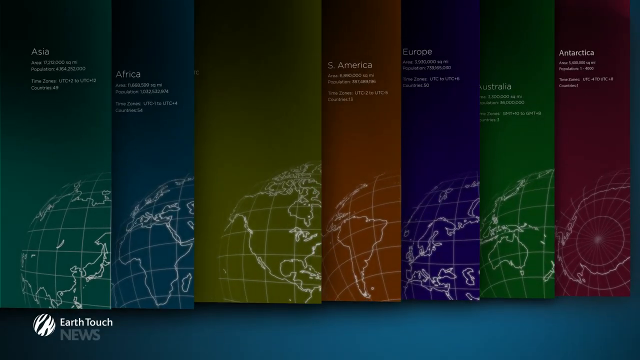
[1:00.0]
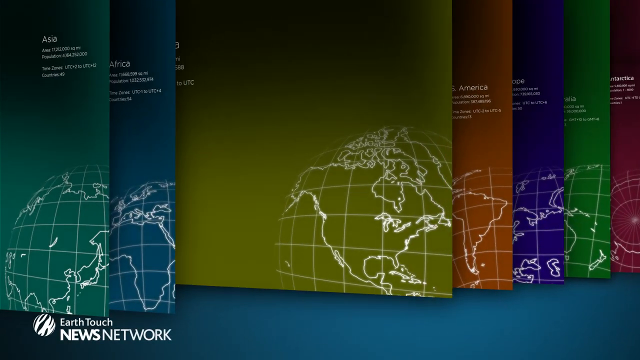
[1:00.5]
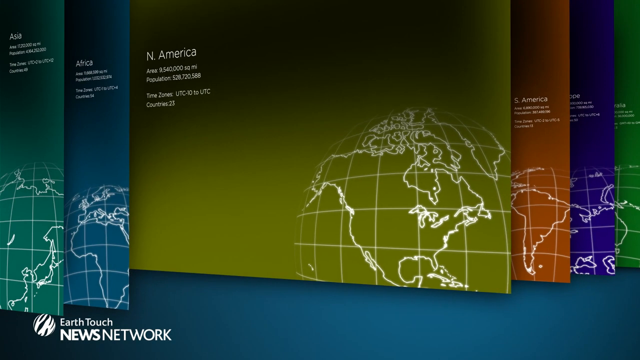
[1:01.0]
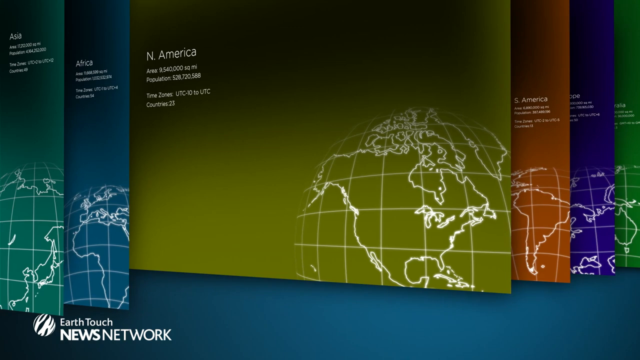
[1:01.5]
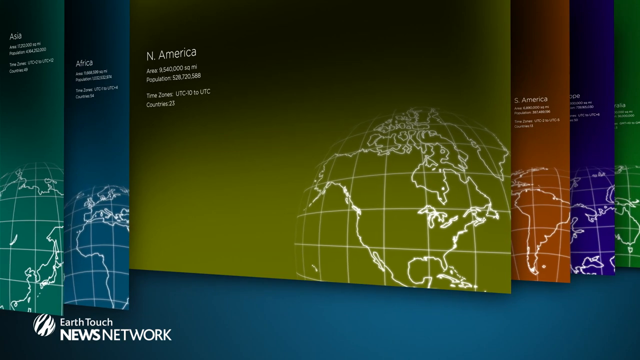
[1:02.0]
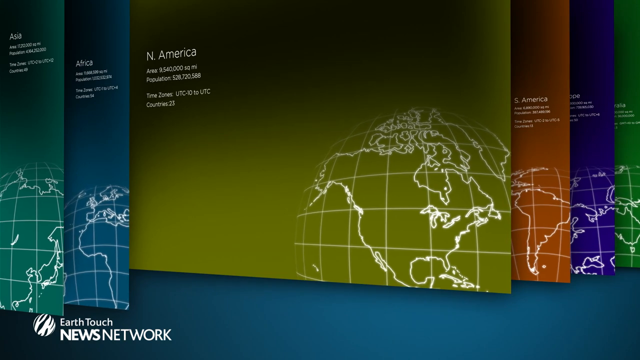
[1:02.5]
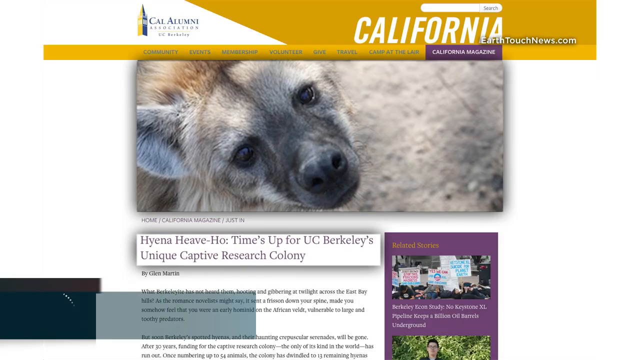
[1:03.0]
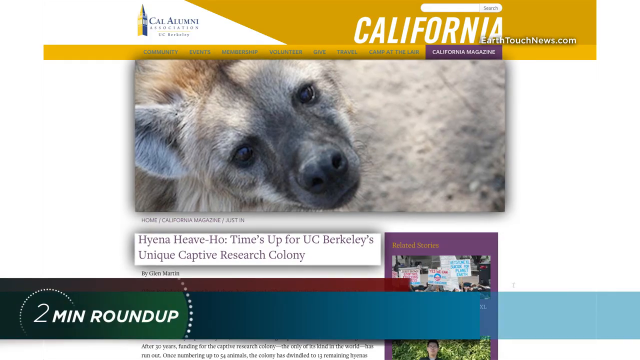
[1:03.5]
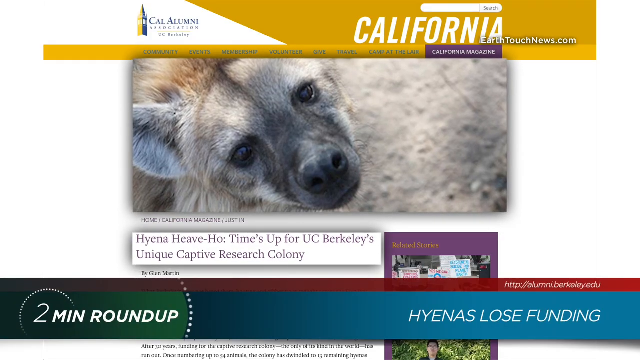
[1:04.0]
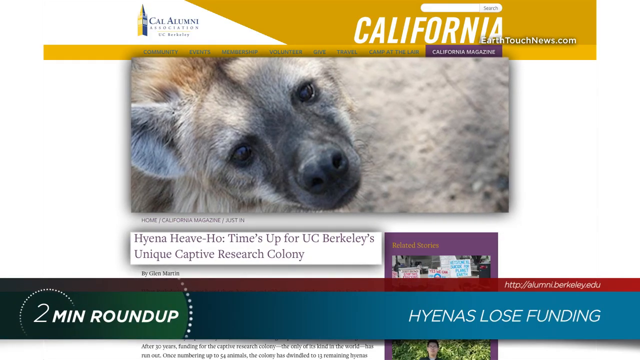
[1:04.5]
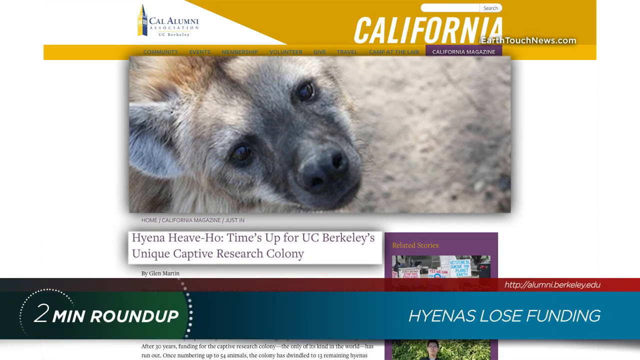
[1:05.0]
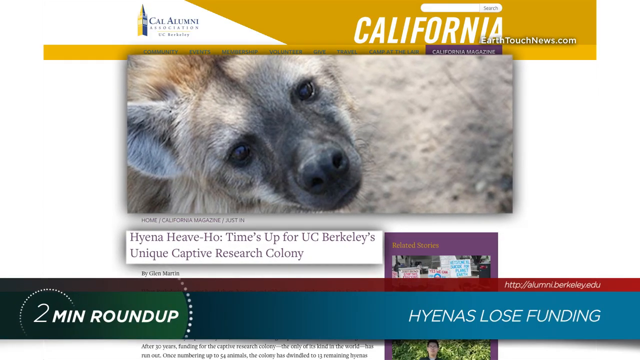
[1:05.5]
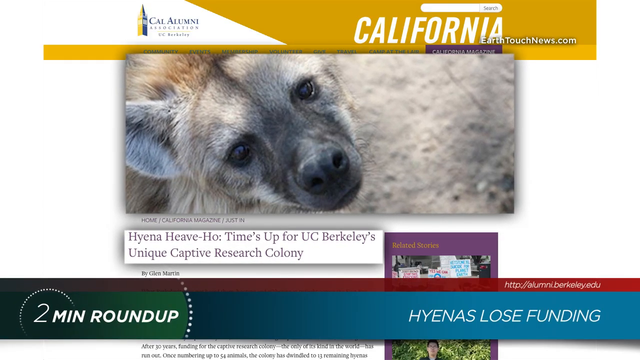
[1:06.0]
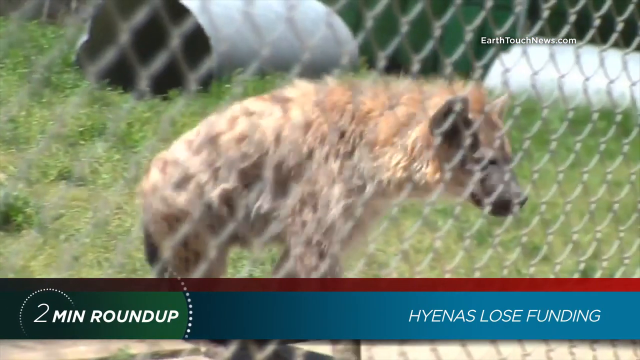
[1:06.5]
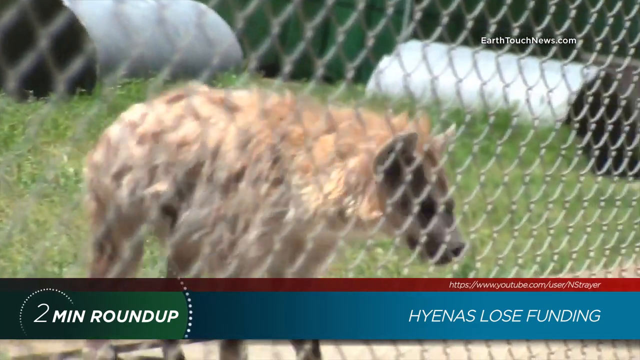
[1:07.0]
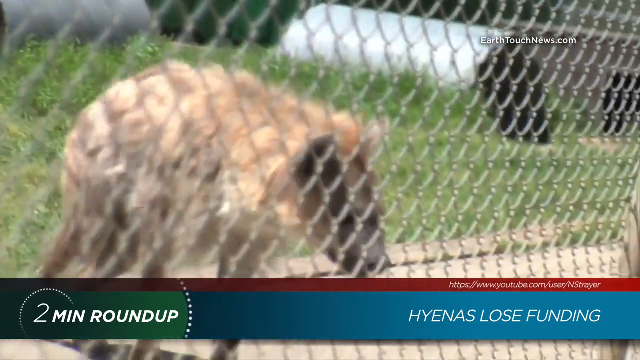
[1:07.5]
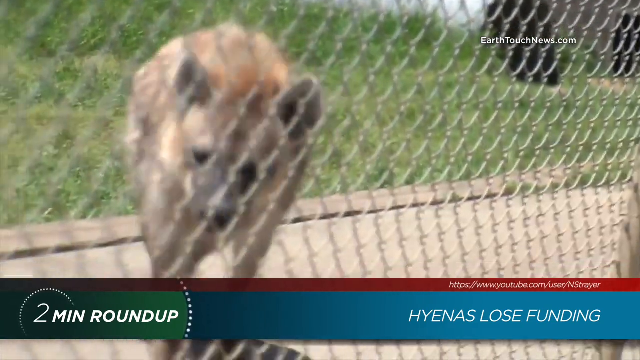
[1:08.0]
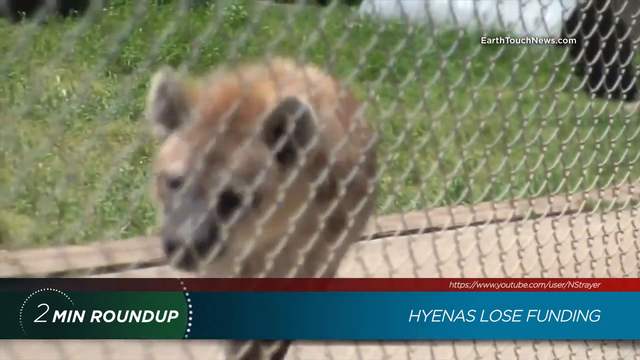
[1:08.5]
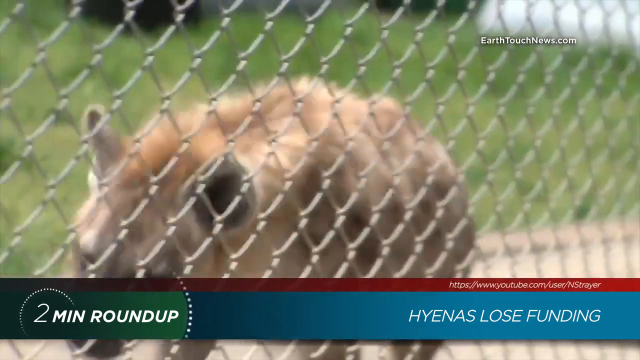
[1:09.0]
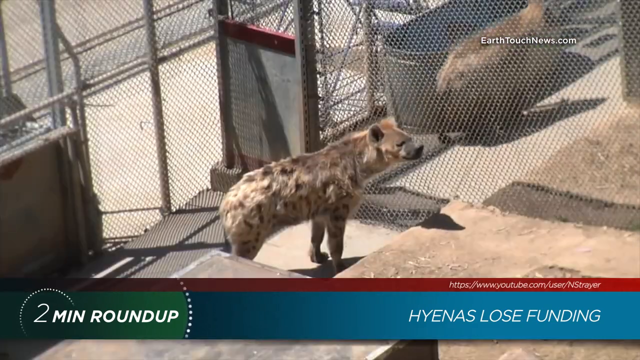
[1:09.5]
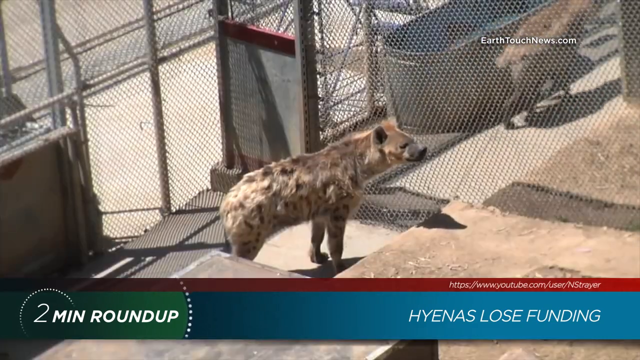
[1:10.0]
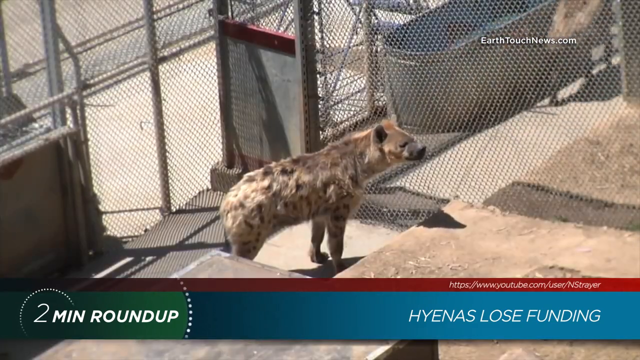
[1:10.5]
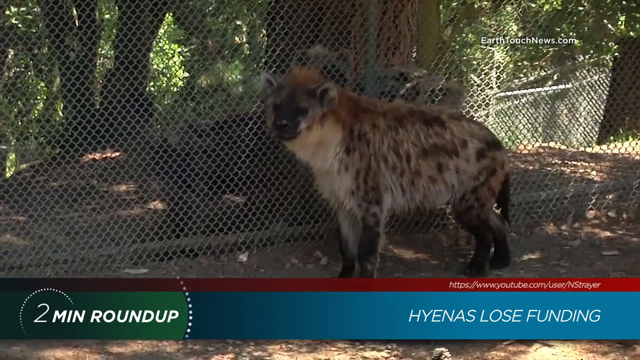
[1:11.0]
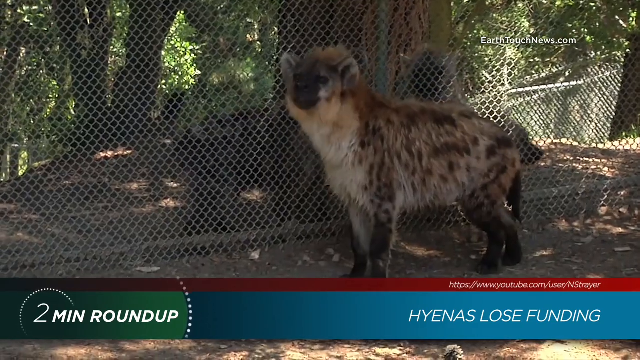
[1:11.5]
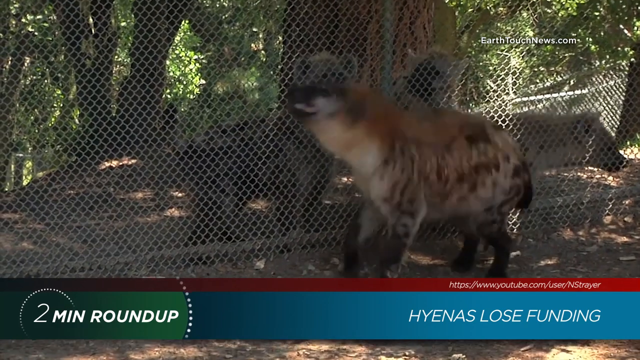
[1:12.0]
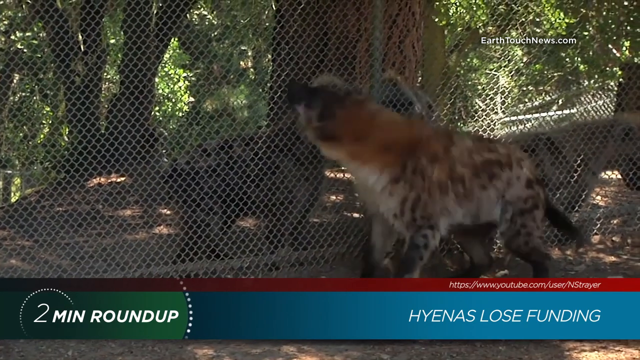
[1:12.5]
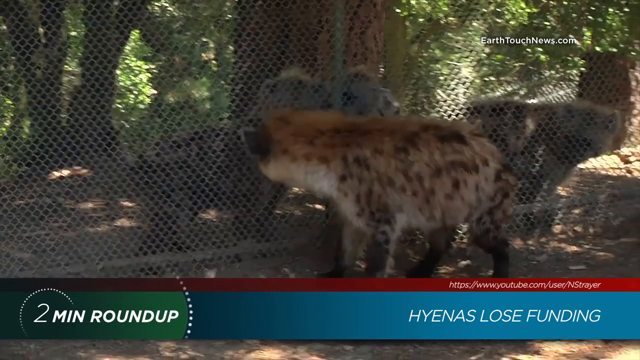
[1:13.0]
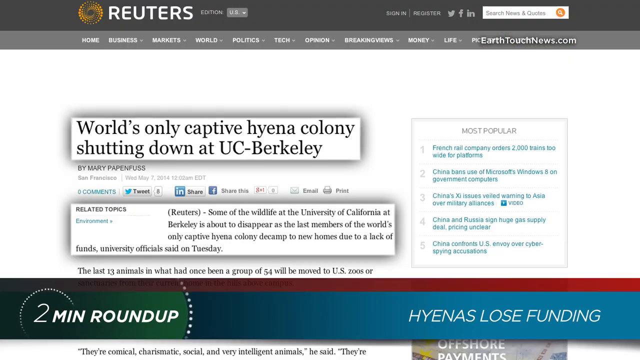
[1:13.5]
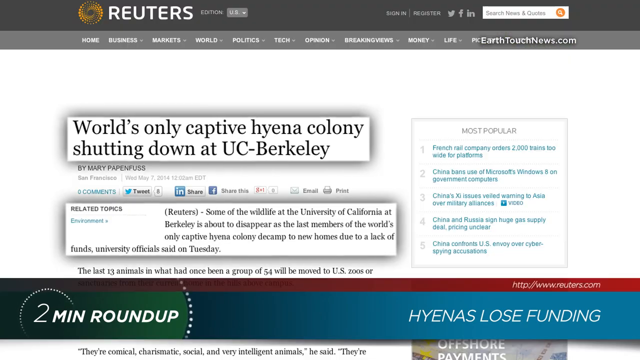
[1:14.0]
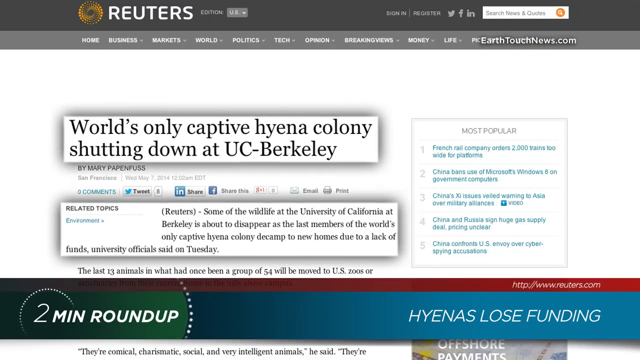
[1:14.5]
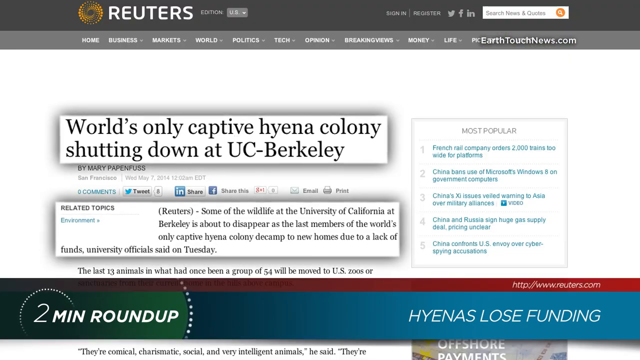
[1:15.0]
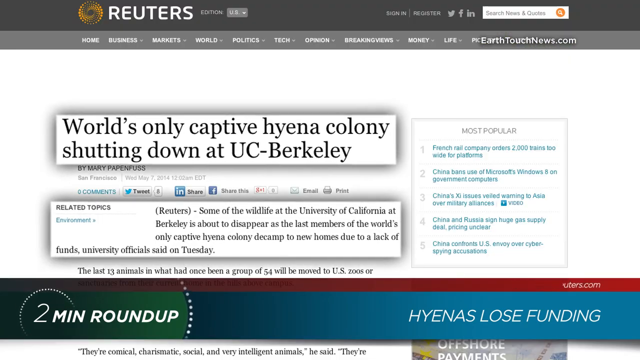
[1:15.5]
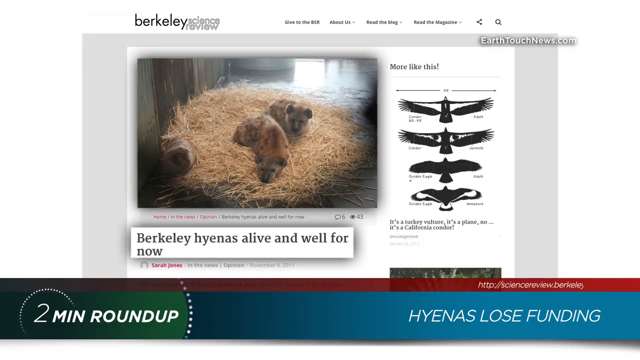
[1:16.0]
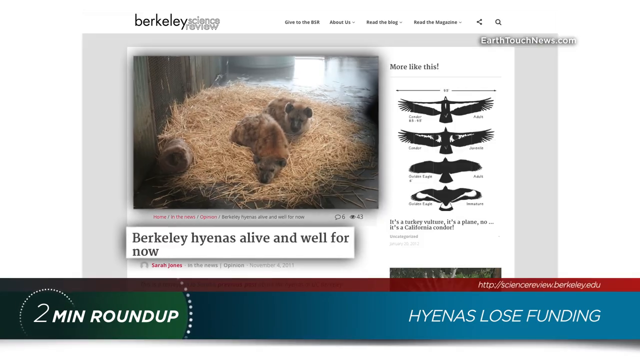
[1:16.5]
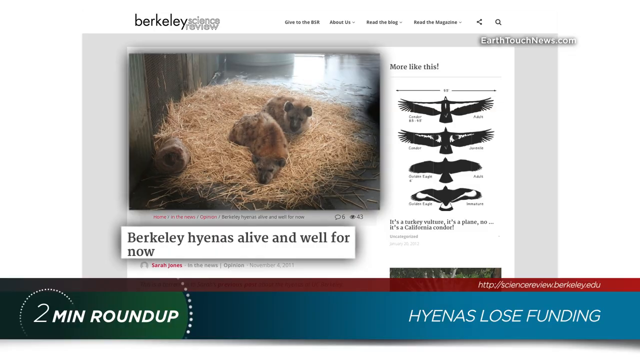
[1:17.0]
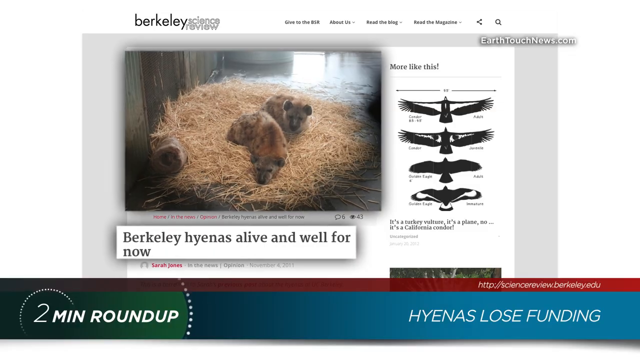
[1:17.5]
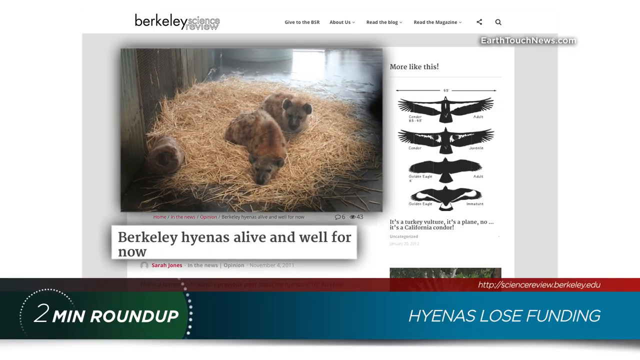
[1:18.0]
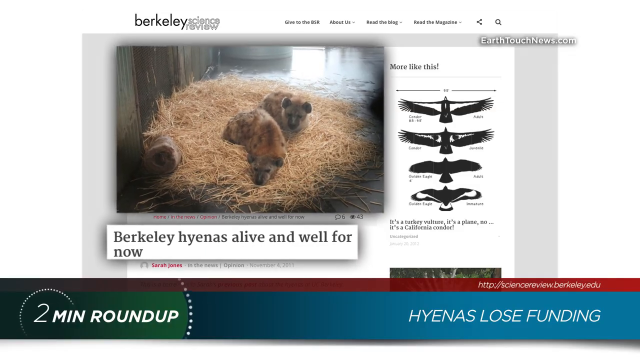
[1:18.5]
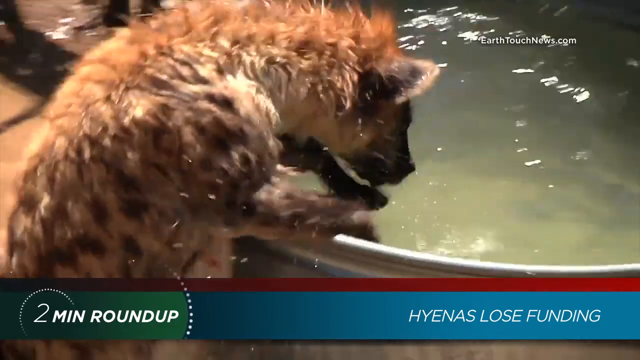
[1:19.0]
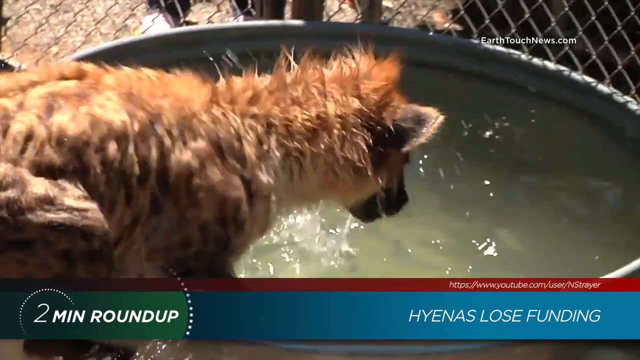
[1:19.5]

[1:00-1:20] All the continents are shown: Asia, Africa, North America, South America, Europe, Australia, and Antarctica. The video zooms in on the words "North America," which are on a yellow card. At the top appears an article from California magazine with a picture of a hyena and the headline "Hyena Heave Ho. Time's up for the UC Berkeley's unique captive research colony." An image follows of a hyena behind a chain-link fence, walking back and forth, then cuts to different hyenas in different enclosures behind chain-link fences, moving back and forth and walking around. Another article has the headline "World's only captive hyena colony shutting down in UC Berkeley," and the view zooms in on text beginning "Reuters, some of the wildlife at the University of California at Berkeley is about to disappear as the last member of the world's only captive hyena colony." Hyenas are then shown sleeping on a haystack, and text reads "Berkeley hyenas alive and well for now." Finally there is an image of what looks like a baby hyena getting into a water bucket.